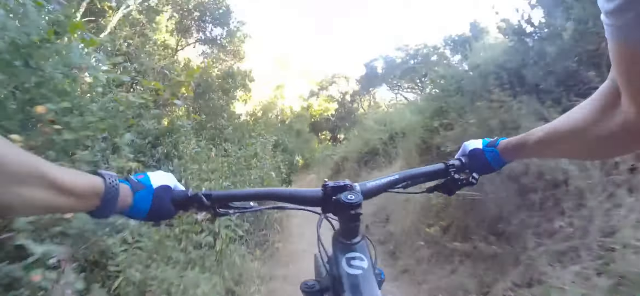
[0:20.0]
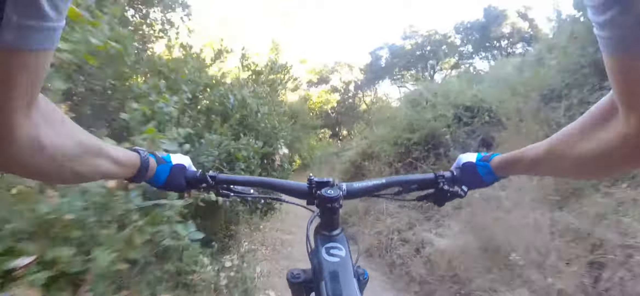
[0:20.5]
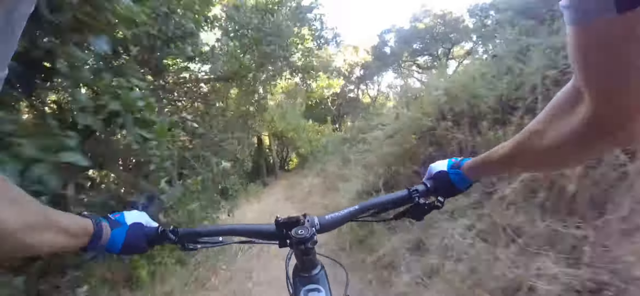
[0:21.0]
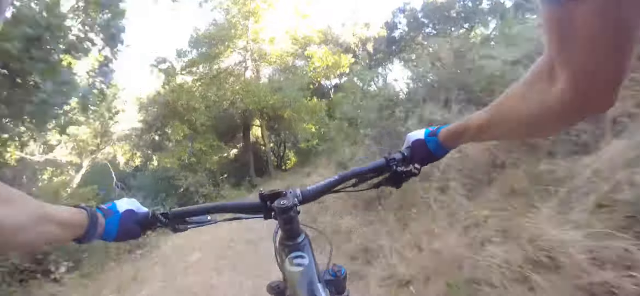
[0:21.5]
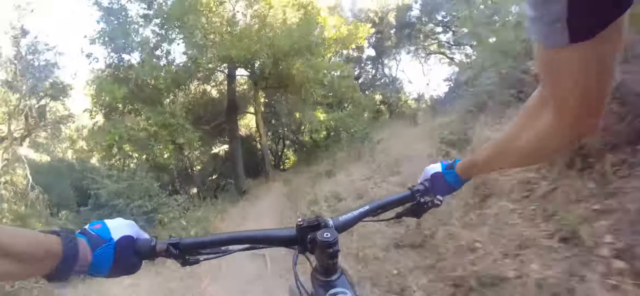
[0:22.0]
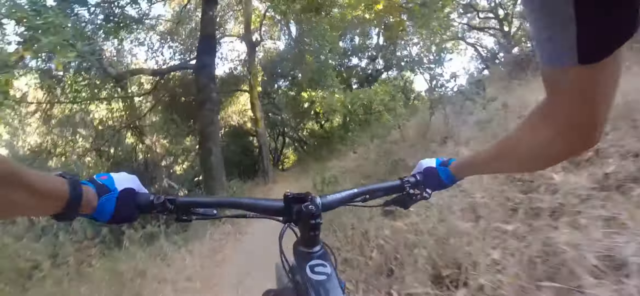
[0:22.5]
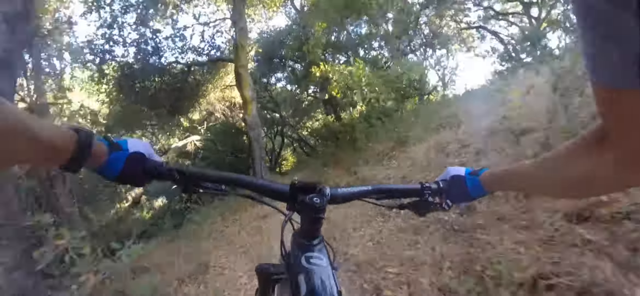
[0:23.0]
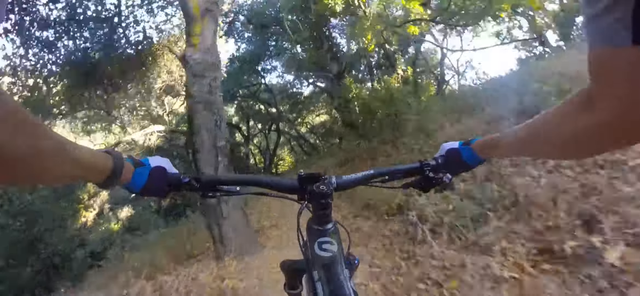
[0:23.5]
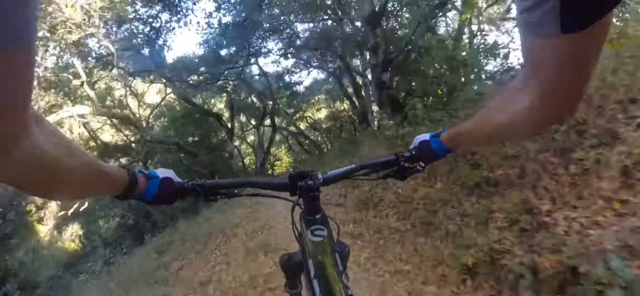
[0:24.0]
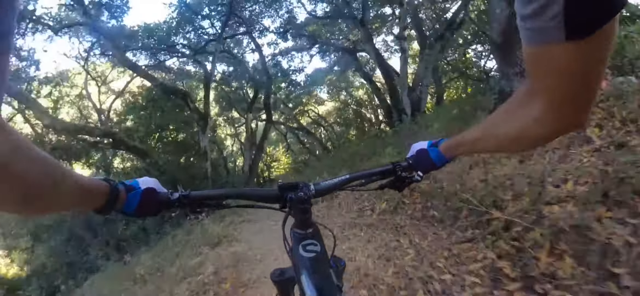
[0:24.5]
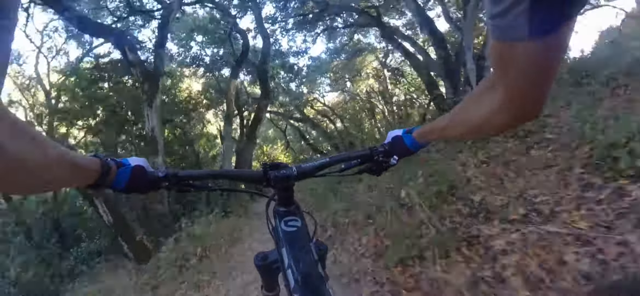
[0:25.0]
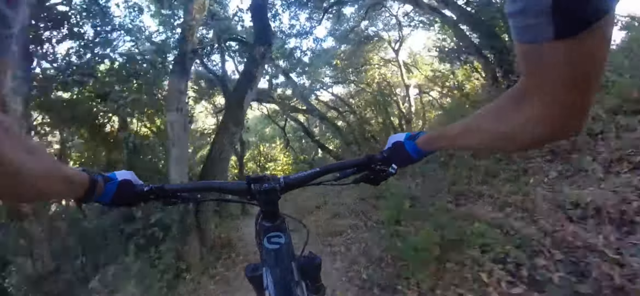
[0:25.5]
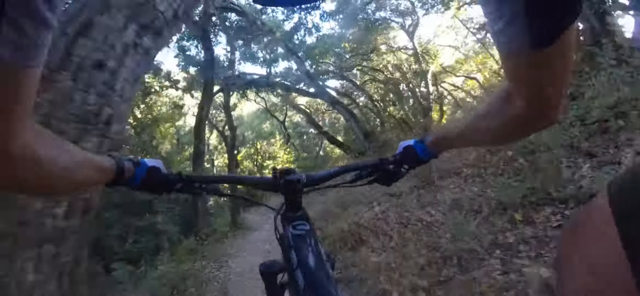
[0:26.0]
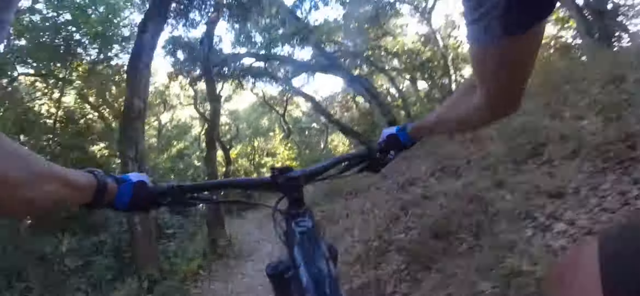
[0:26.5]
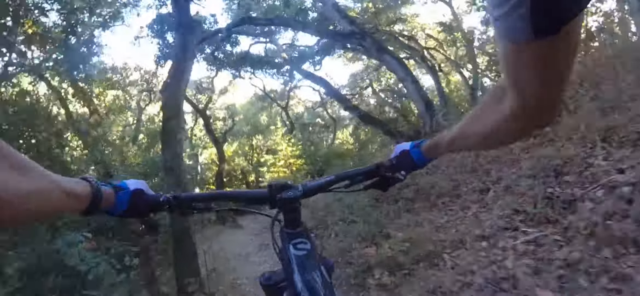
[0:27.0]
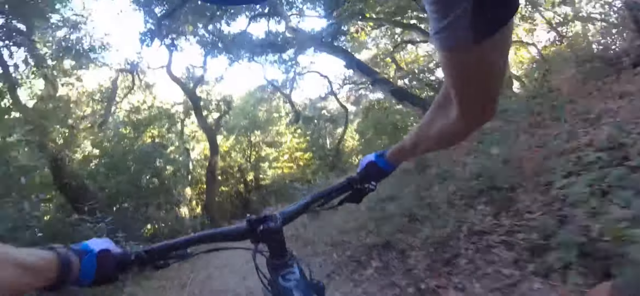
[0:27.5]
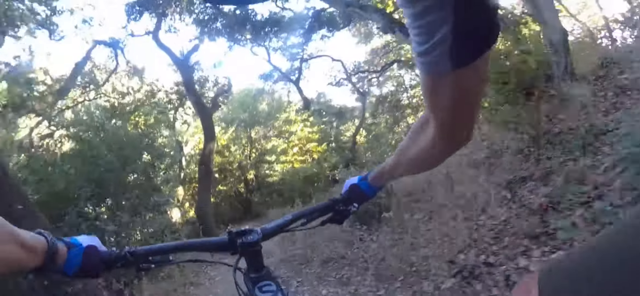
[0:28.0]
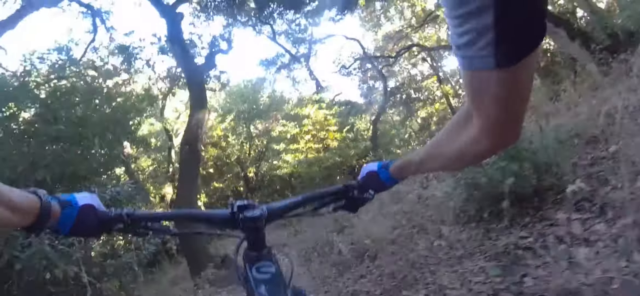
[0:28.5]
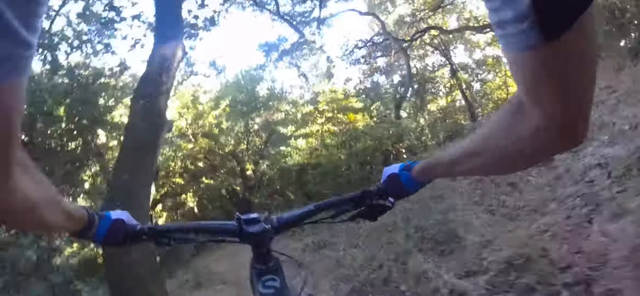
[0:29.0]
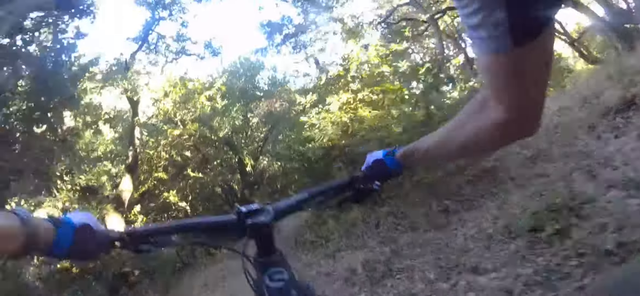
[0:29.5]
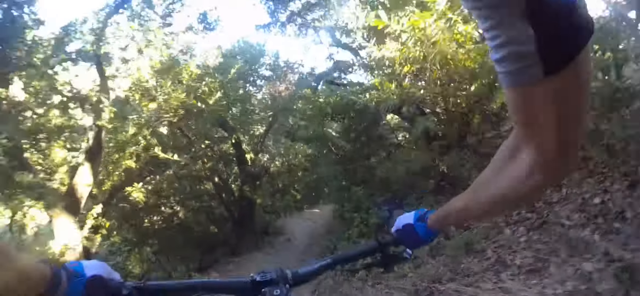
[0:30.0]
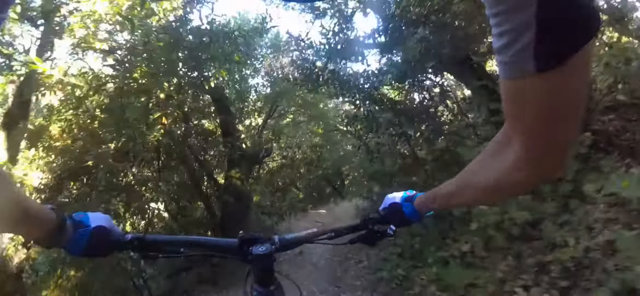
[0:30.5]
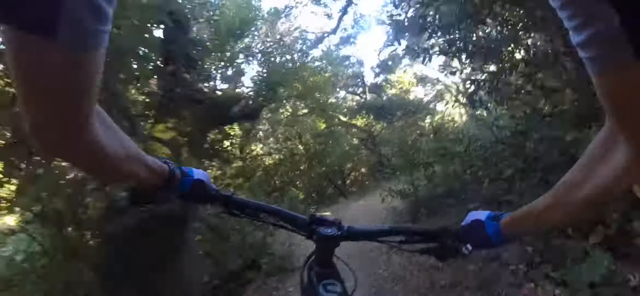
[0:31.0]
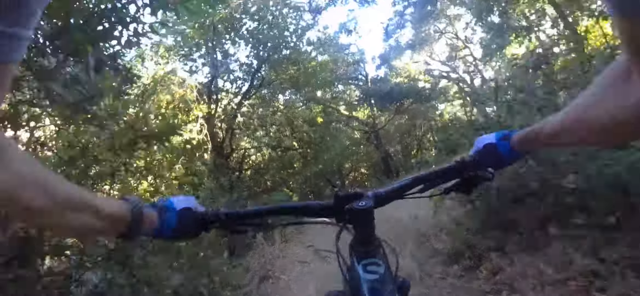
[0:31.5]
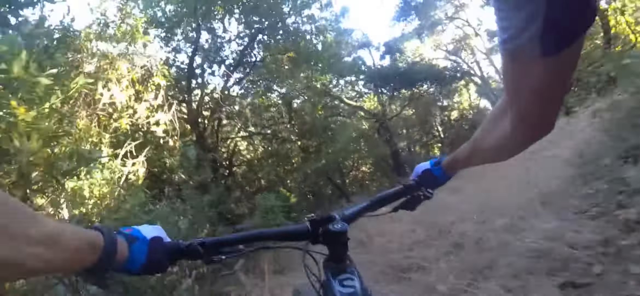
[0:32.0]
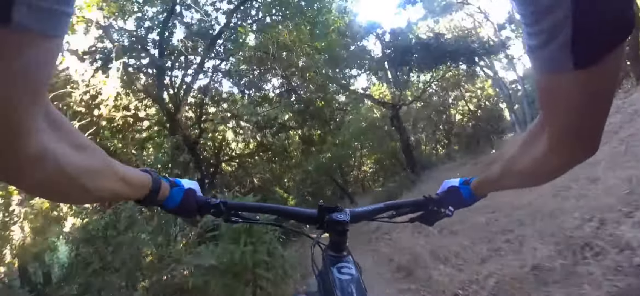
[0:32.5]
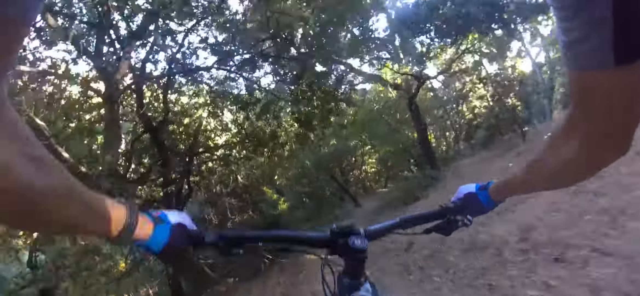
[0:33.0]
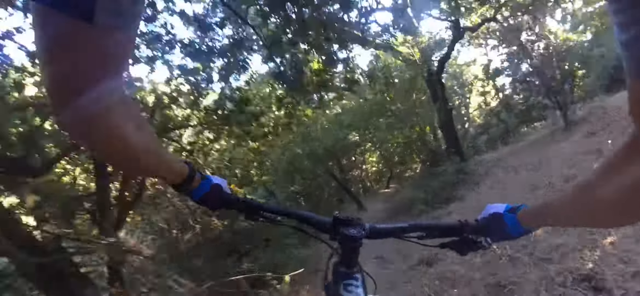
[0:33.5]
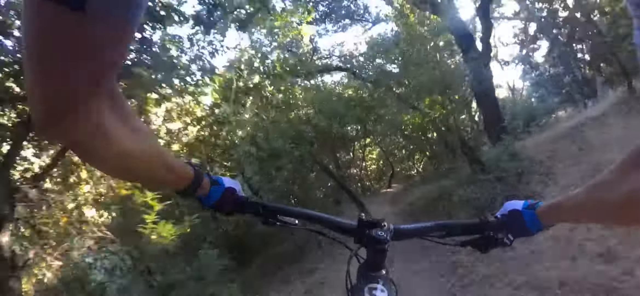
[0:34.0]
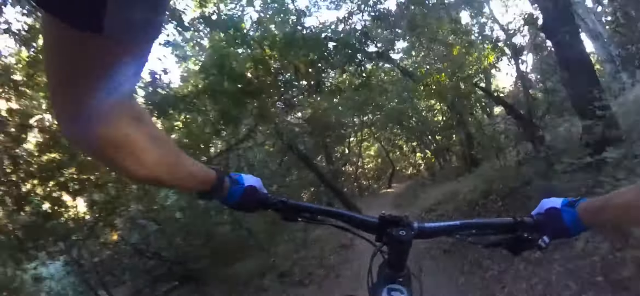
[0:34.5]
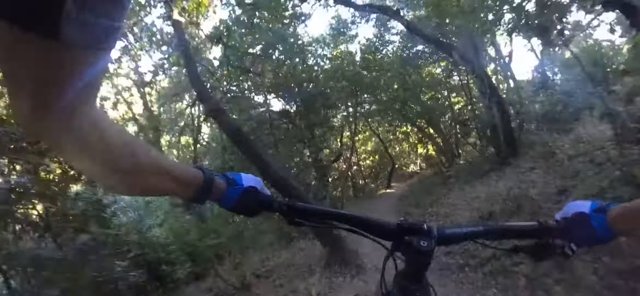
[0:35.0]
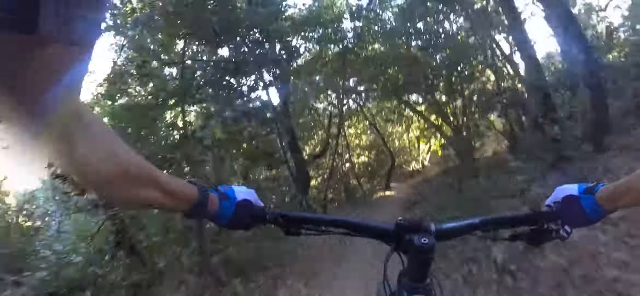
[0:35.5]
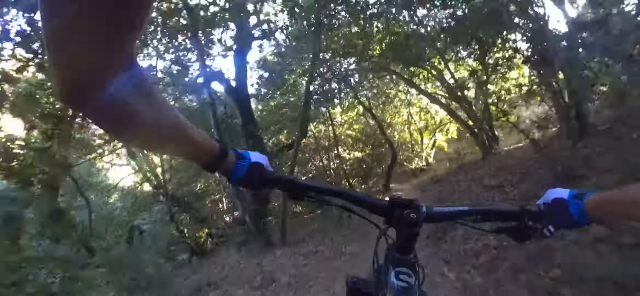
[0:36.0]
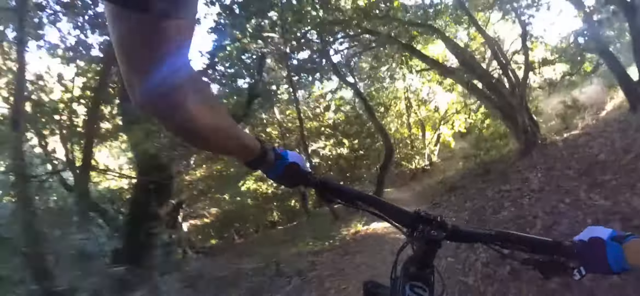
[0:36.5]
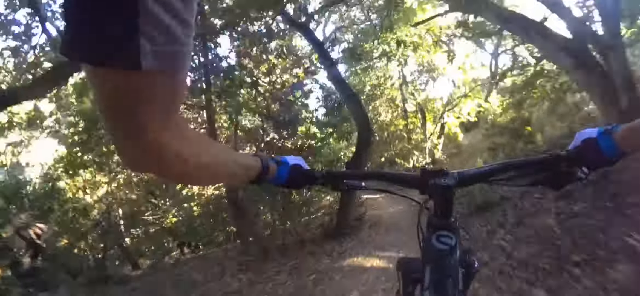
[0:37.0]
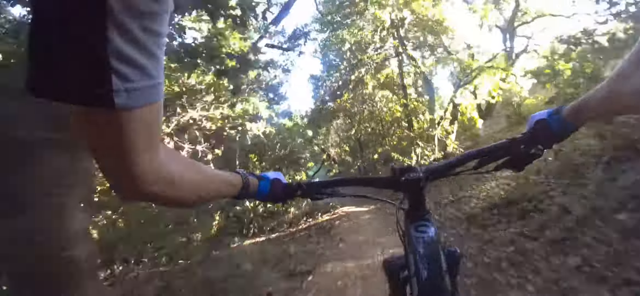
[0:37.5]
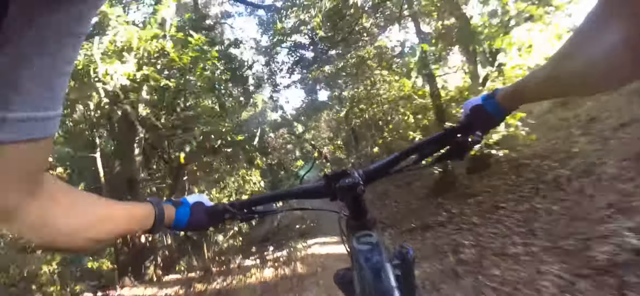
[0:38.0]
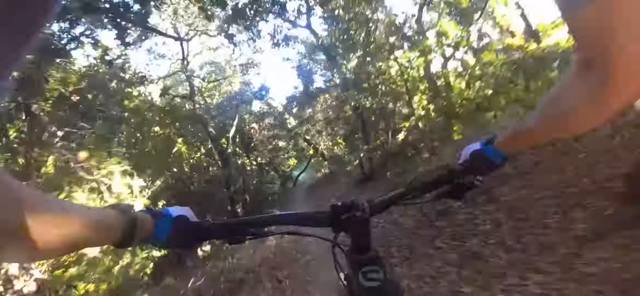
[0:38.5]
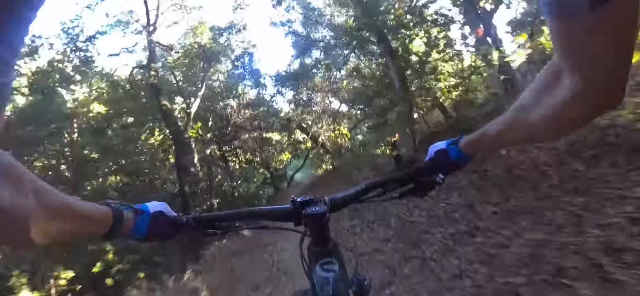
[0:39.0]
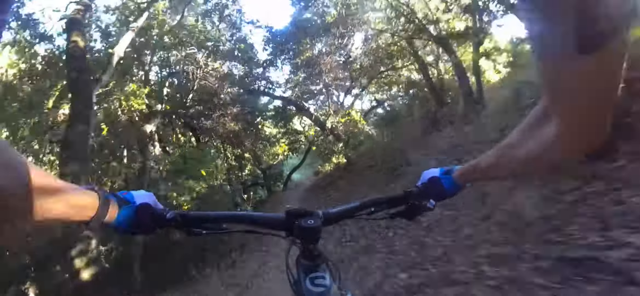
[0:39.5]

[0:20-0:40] The white cyclist wears gloves in two shades of blue, darker around the back of the palm and lighter around the knuckles, and has a black band, most likely a watch, on his left wrist. He rides a black bicycle down a muddy, light brown path surrounded by trees and brush in a forested area. His short-sleeved shirt is two shades of blue, lighter around the bicep and darker behind the triceps. The path is uneven, and his arms shake continuously as he bounces along. Open areas above let the sun create a bit of light, and then he goes into darker, more densely shaded areas of the forest.